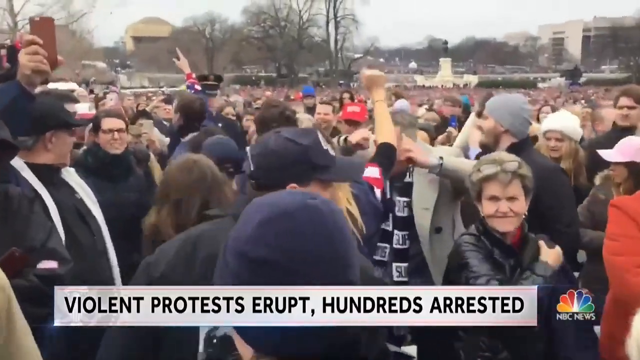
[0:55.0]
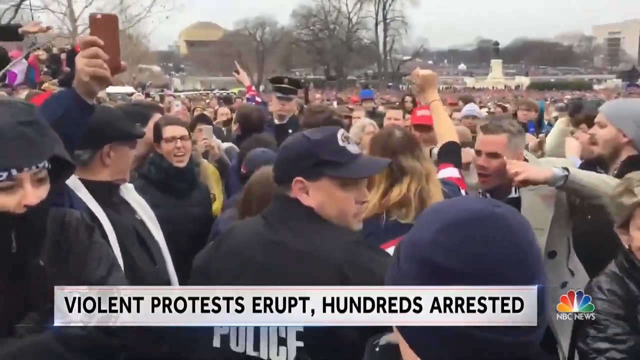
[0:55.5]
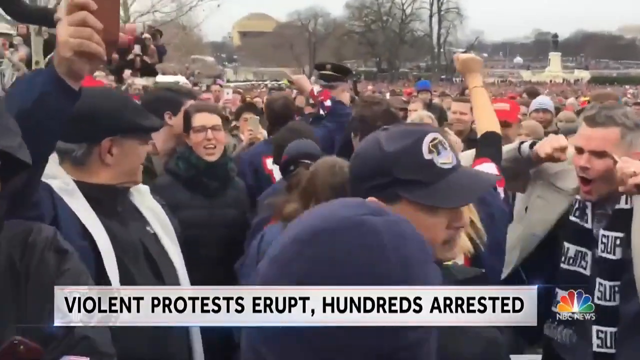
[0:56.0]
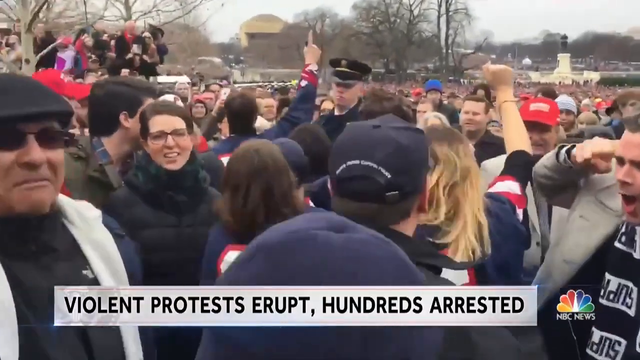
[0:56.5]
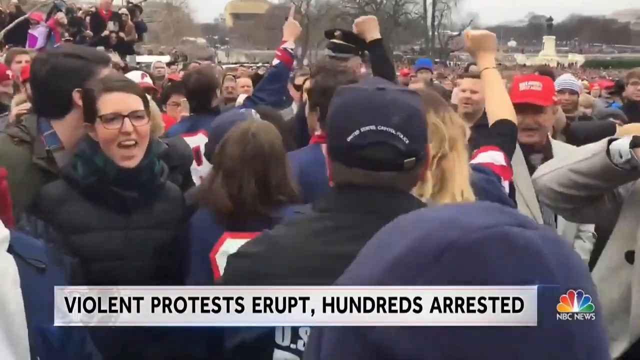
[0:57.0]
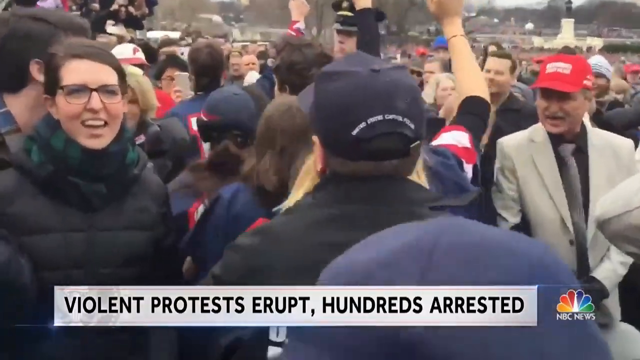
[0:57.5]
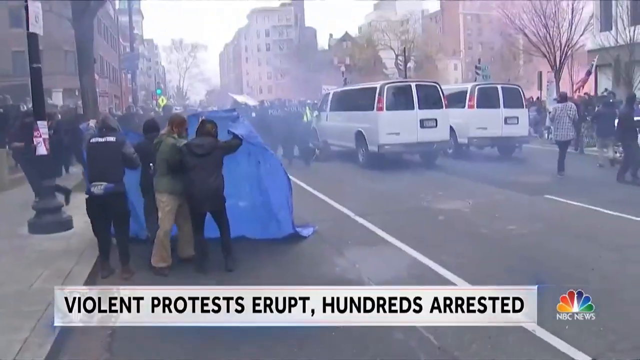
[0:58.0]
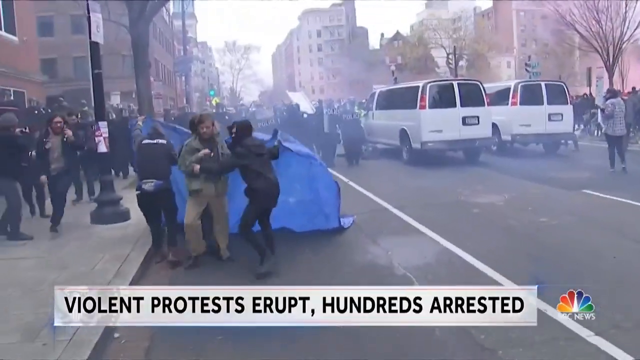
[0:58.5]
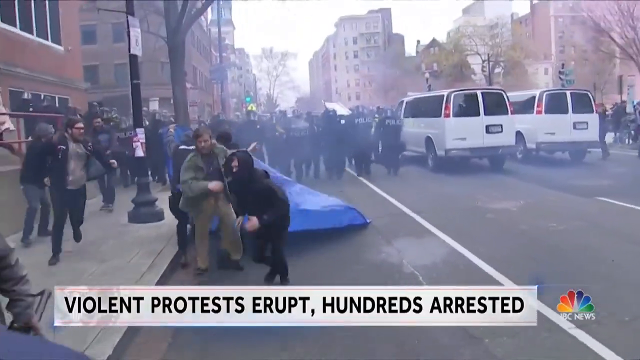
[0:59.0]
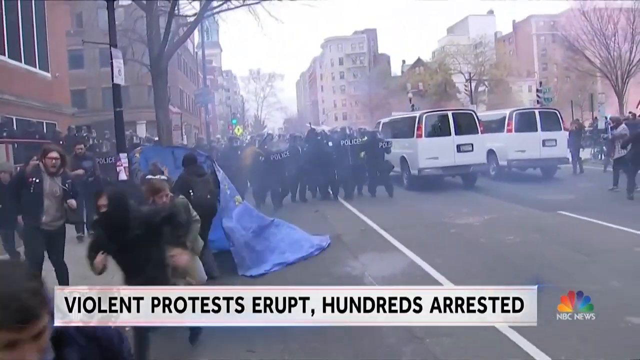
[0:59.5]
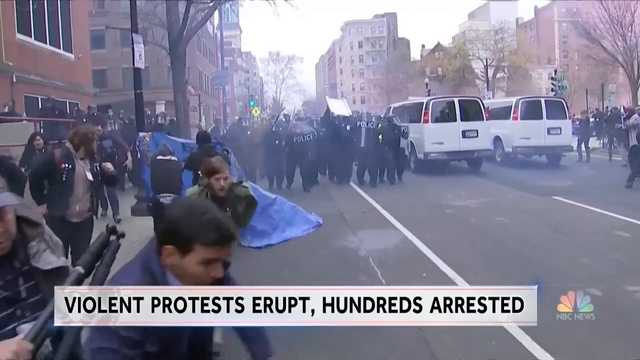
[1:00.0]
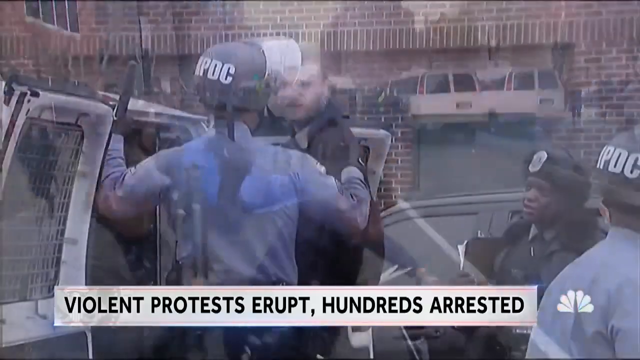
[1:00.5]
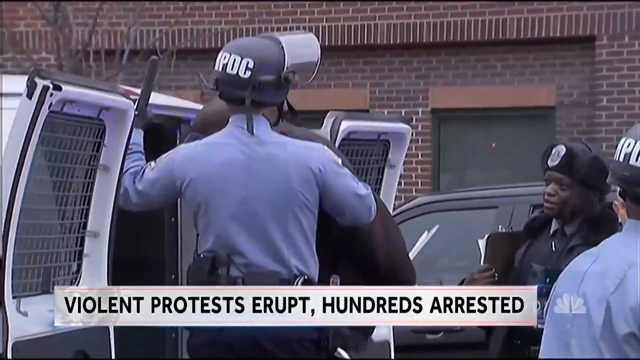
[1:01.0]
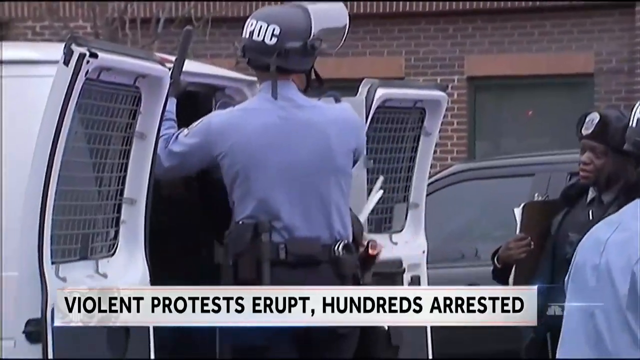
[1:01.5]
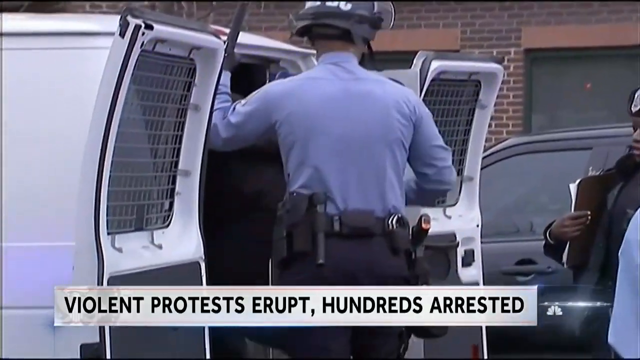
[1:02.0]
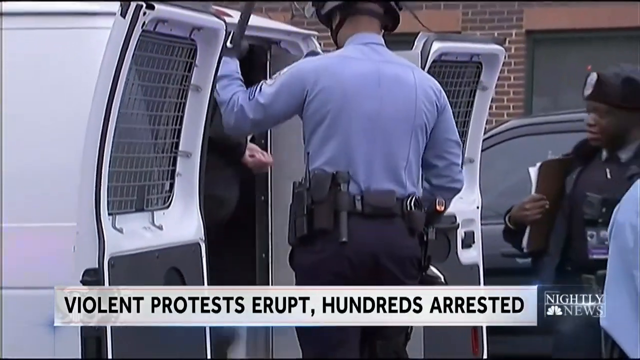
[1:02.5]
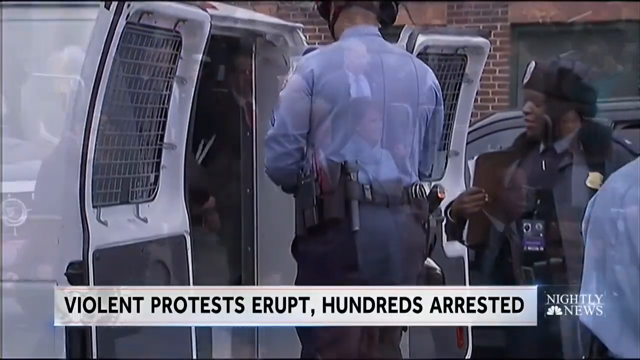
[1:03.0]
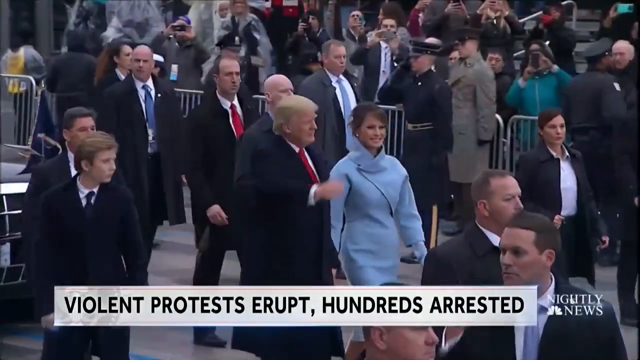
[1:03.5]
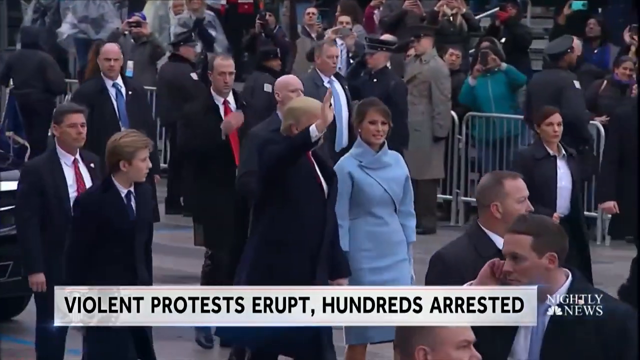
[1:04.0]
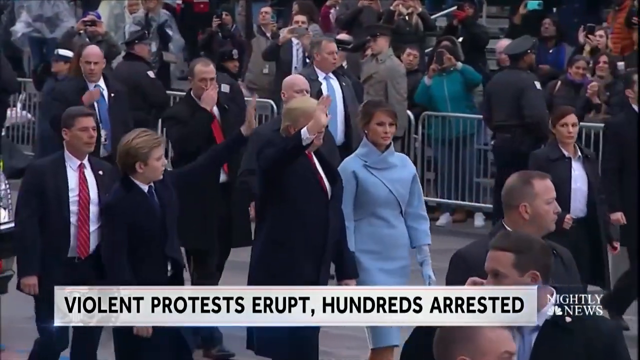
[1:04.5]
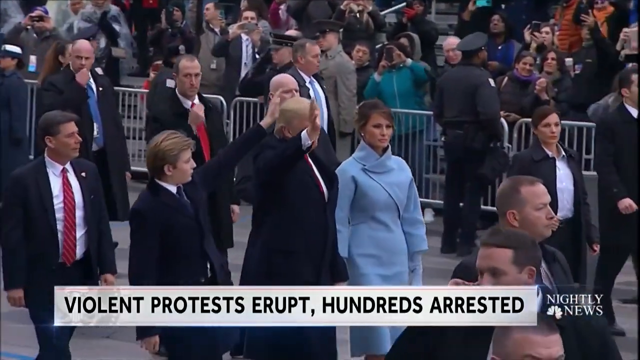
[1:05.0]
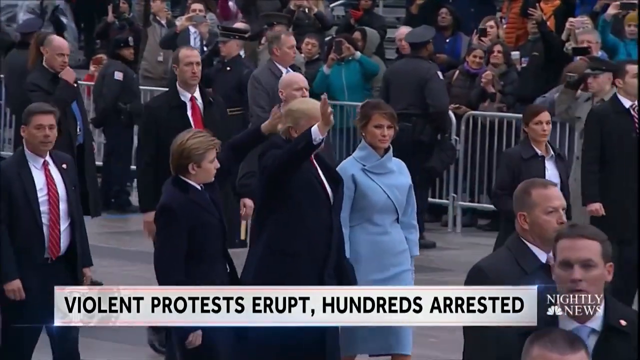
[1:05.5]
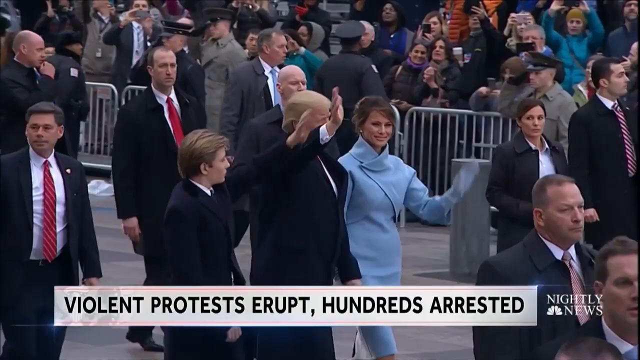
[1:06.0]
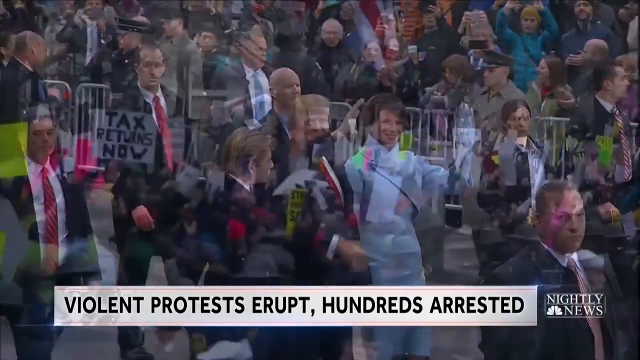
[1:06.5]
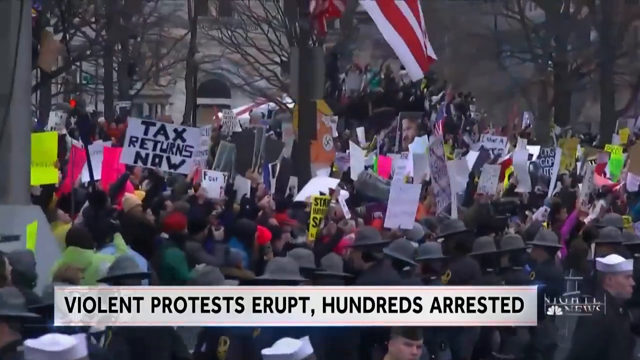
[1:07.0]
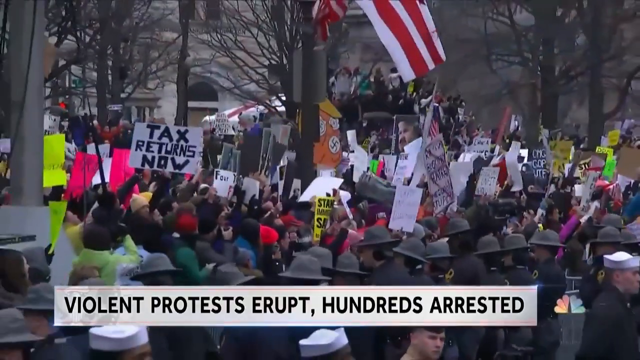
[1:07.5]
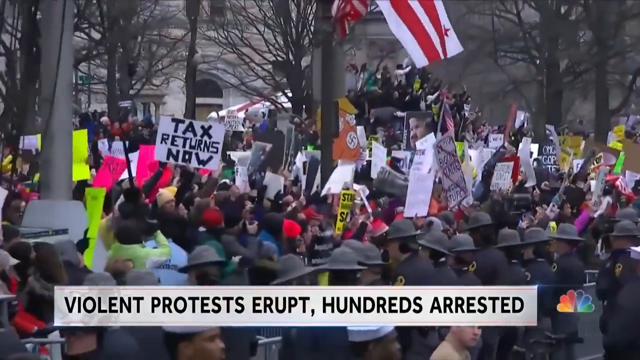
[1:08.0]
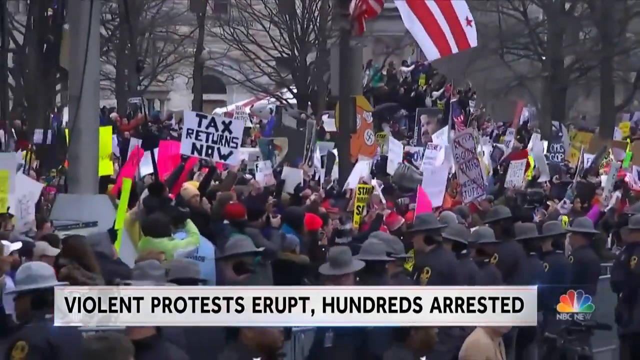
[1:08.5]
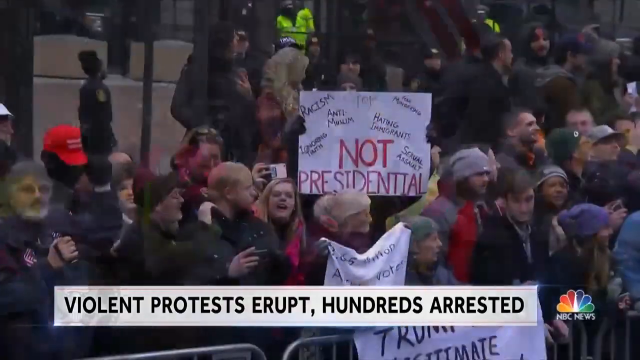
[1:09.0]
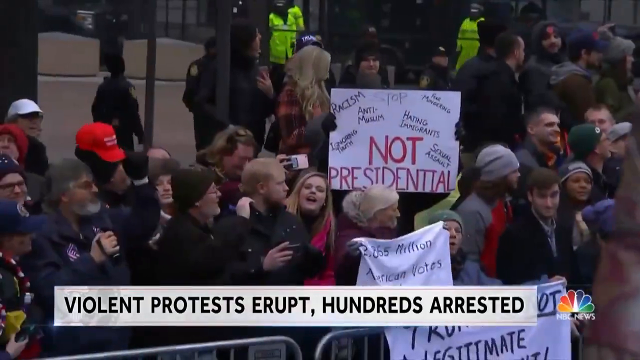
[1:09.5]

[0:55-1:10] People run away from the police as fast as possible. People protest the inauguration of Donald Trump. Donald Trump walks with his wife and his son, Barron Trump, waving to onlookers. People stand behind barricades holding protest signs, including ones reading "tax returns now" and "not presidential." Other people are happy that Trump has been elected president, and a few of the Trump supporters mock the protesters with hand gestures that signify crying like a baby. Police arrest some individuals.